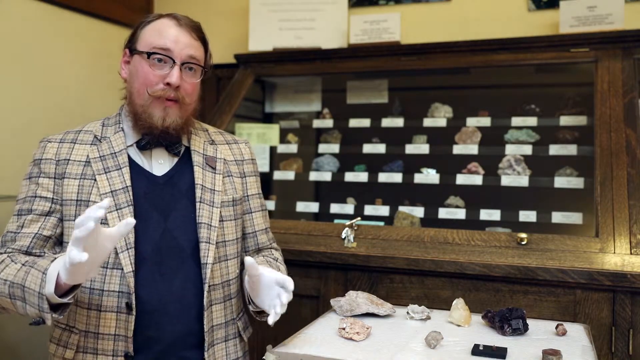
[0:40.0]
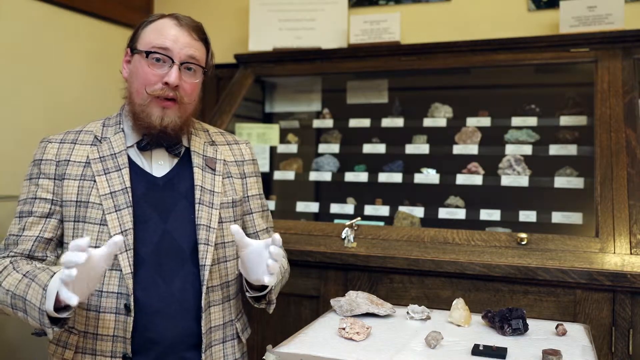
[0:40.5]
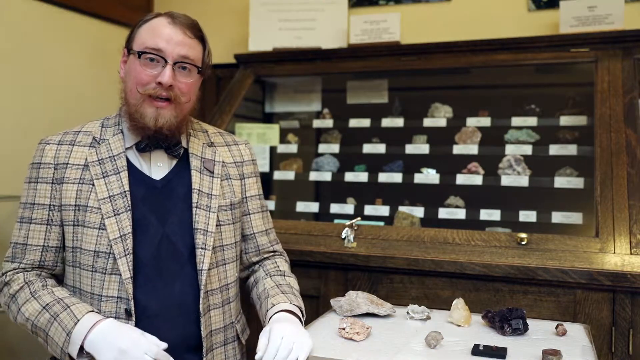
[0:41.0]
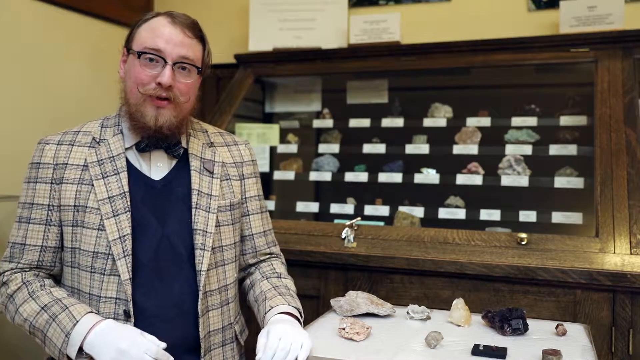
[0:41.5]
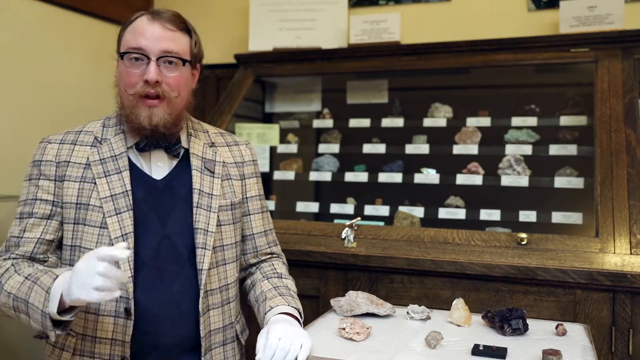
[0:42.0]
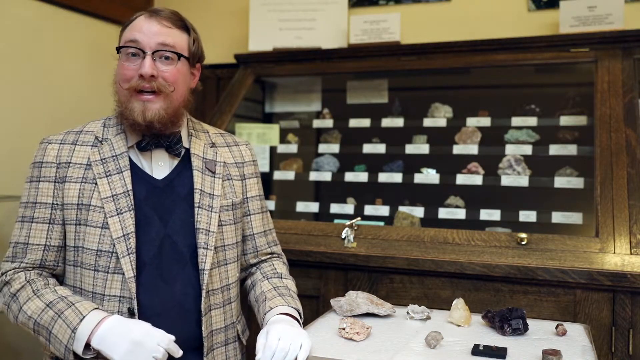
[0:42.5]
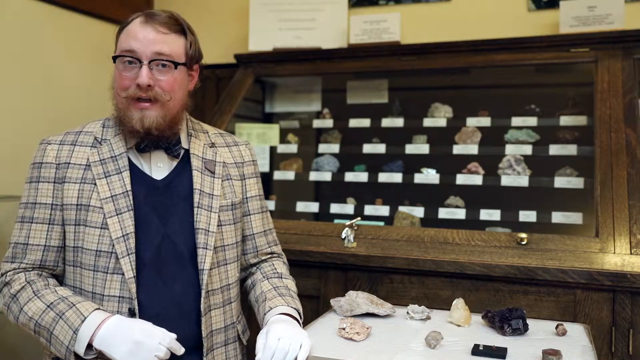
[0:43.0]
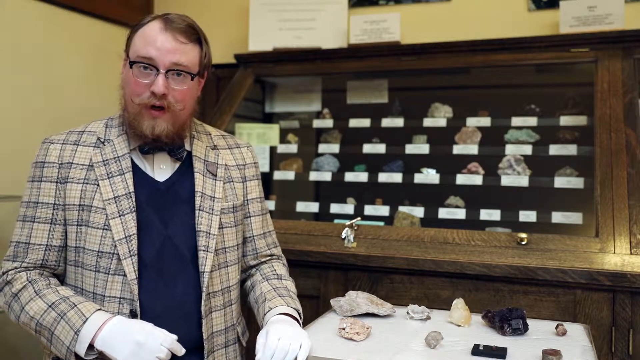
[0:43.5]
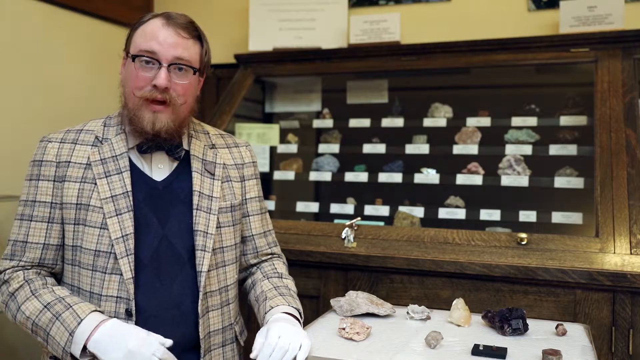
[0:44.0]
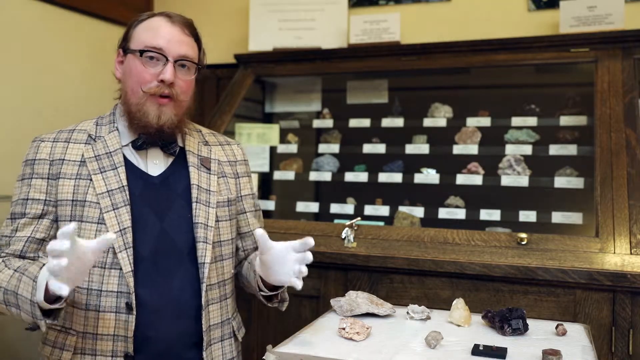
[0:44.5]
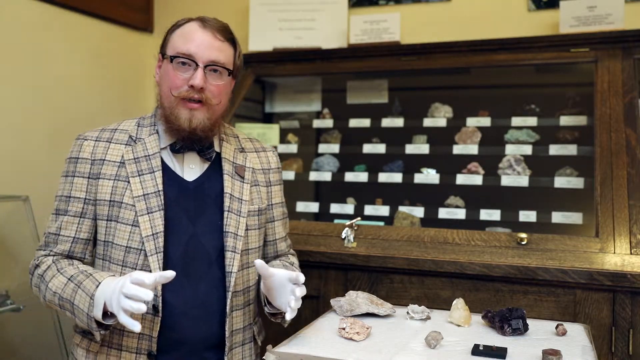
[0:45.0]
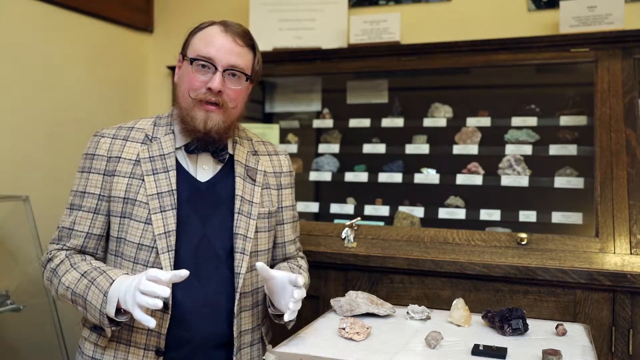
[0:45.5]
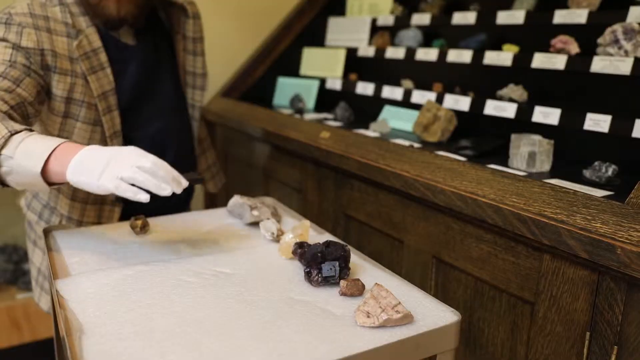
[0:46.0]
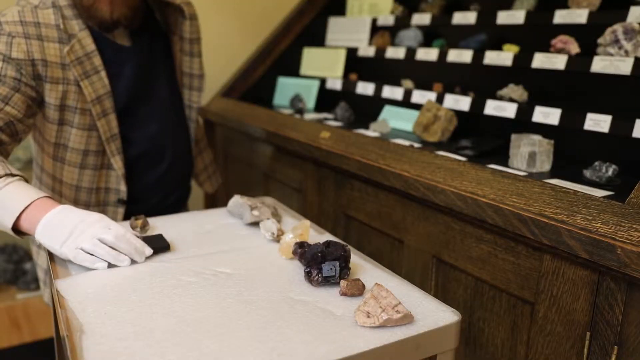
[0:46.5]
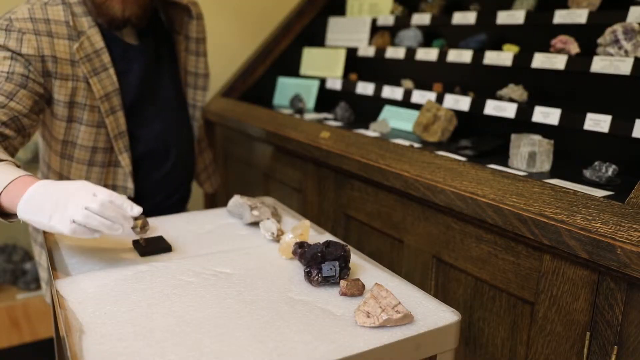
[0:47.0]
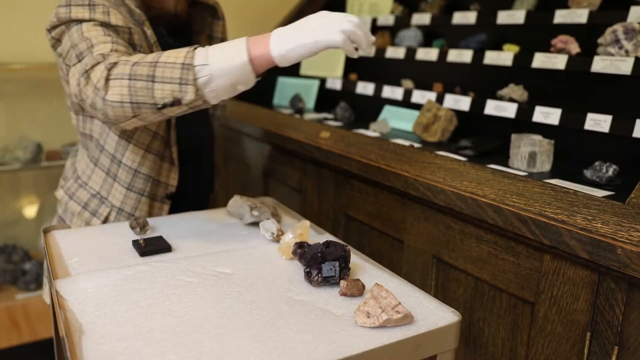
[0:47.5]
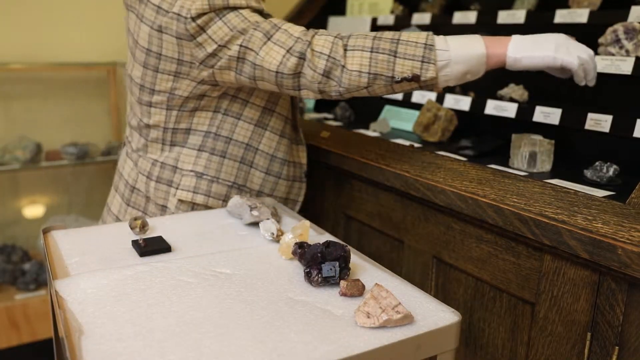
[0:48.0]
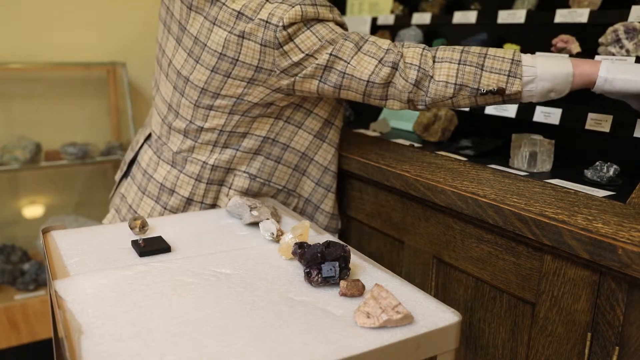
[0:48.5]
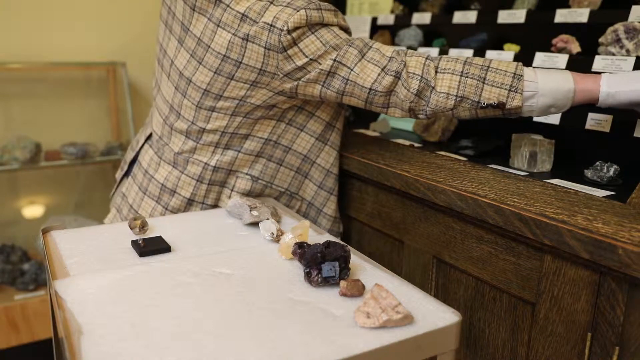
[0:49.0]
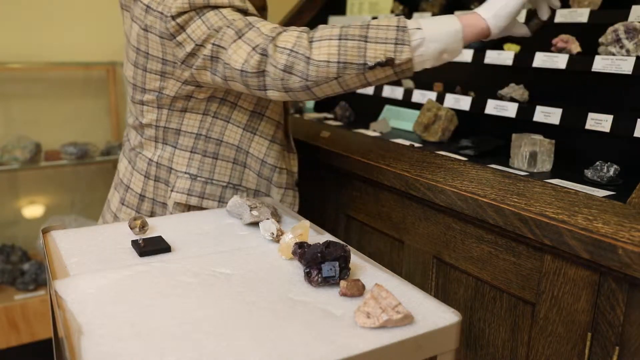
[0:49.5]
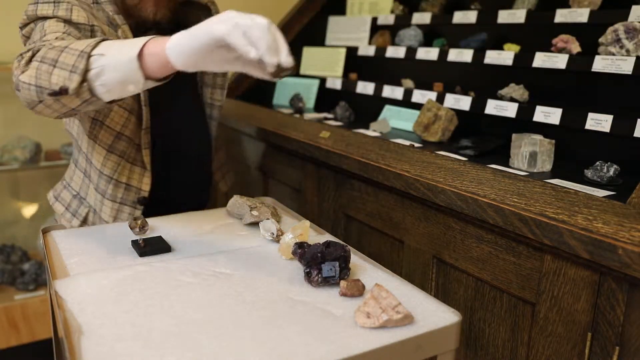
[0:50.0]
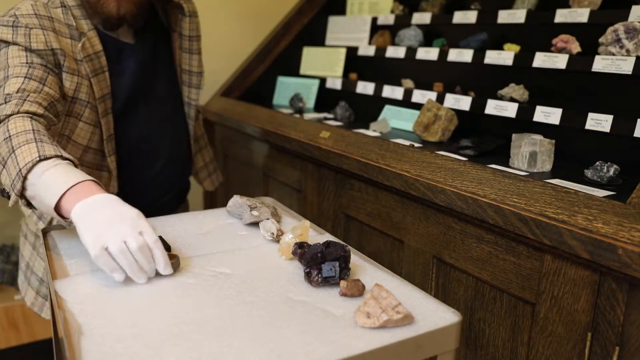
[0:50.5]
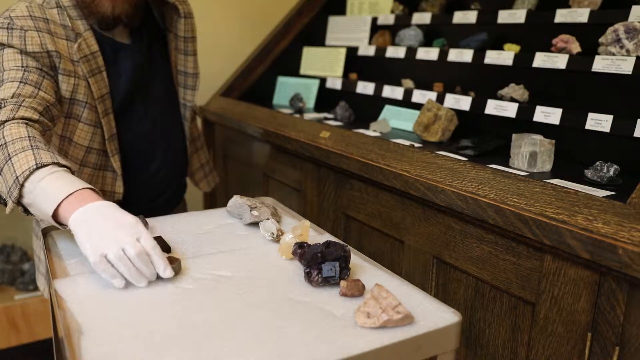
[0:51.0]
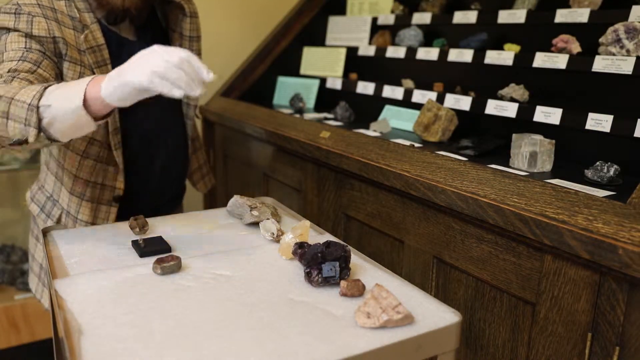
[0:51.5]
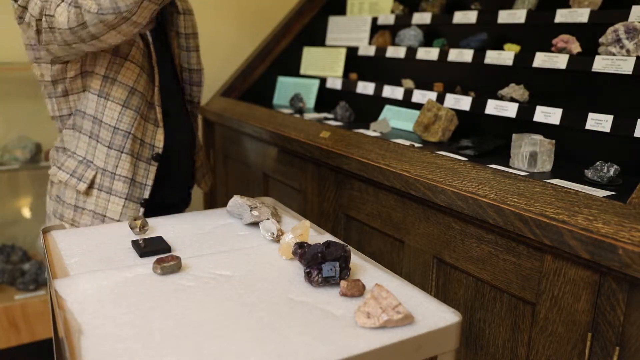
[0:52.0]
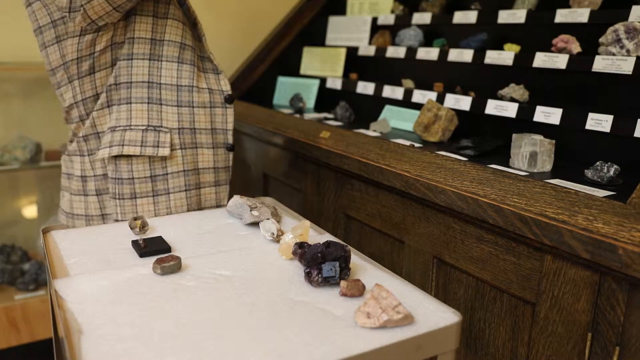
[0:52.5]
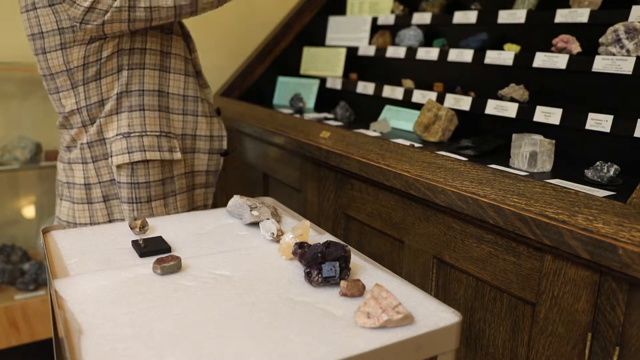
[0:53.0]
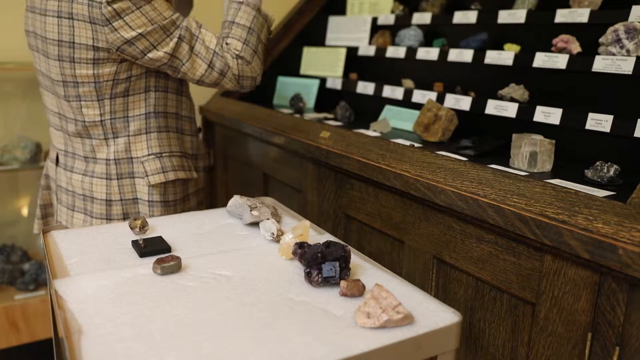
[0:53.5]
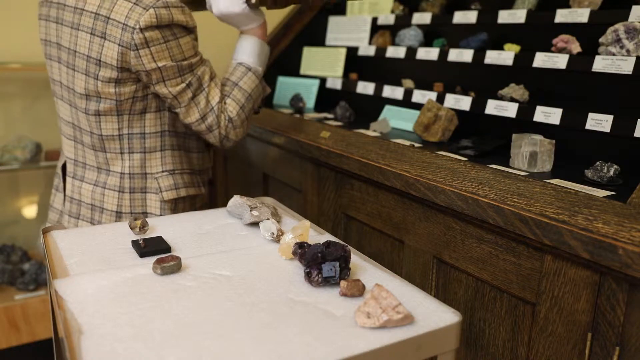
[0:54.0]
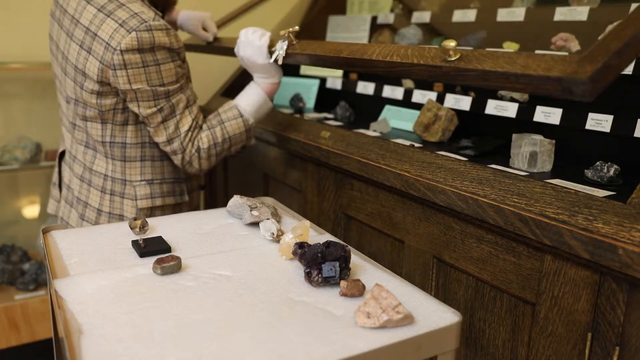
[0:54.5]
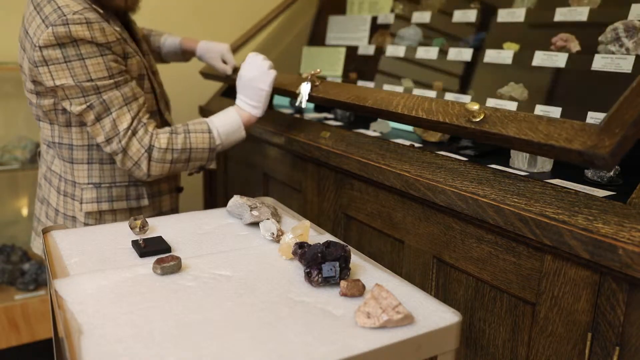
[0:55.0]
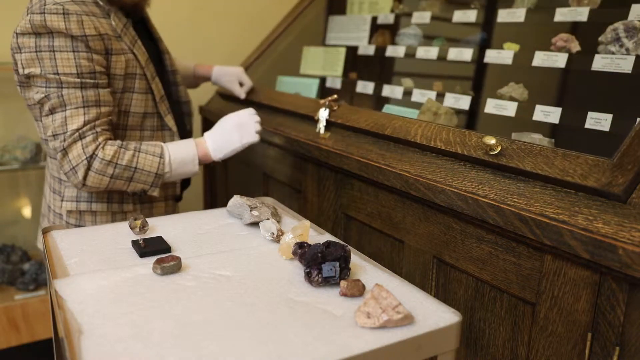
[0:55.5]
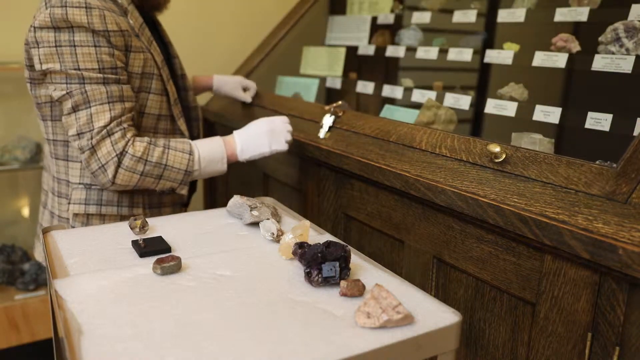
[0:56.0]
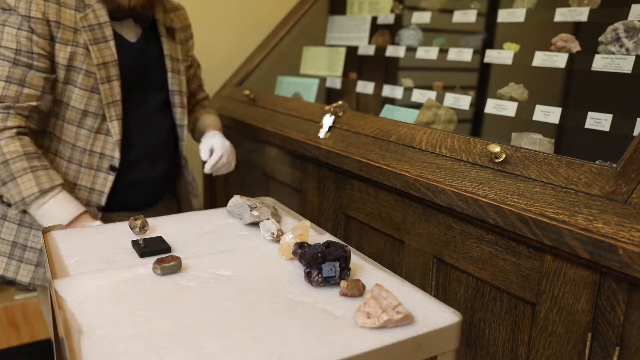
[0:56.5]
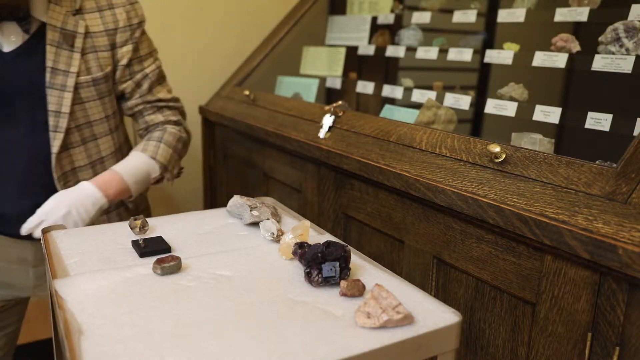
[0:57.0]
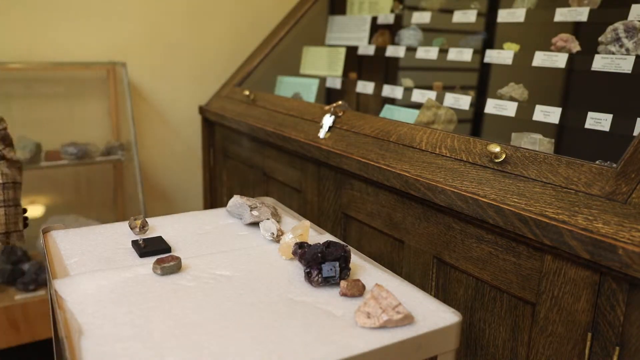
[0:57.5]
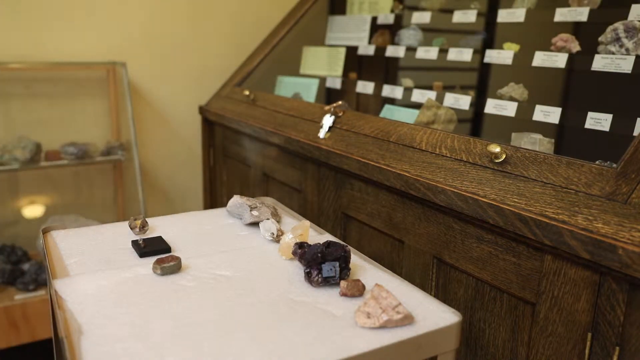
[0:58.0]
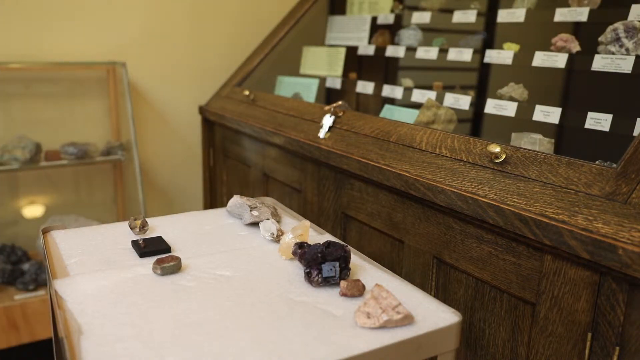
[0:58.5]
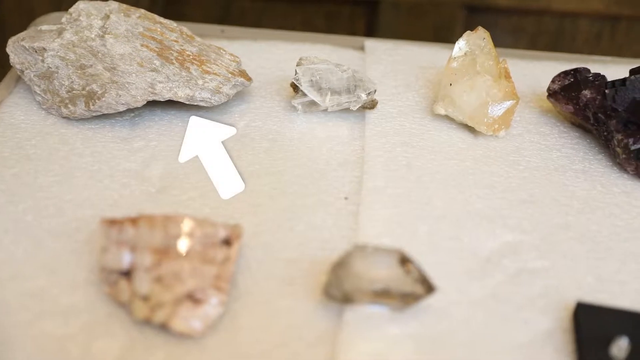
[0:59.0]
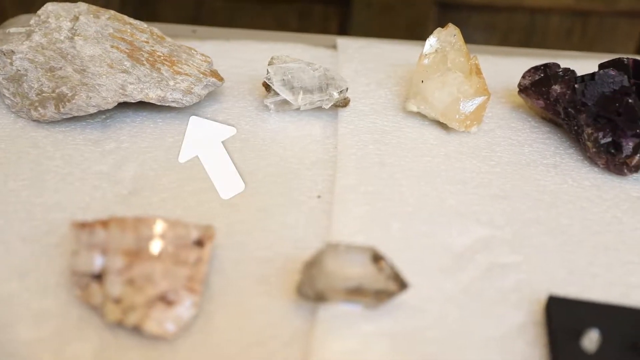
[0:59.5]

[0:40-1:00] Garrett Barmore stands on the left of the picture, wearing white cotton gloves, a blue V-neck sweater, a white shirt and a bow tie, and waves his arms in front of his chest to emphasise his words. The scene changes to a closer view of the glass-fronted, wall-mounted cabinet at the rear of the room, which holds rows of rock specimens, each with a white card label beneath it. Its glass front has been swung upwards to open it. Some larger blue, yellow and white cards with writing on them are on the left of the display. He reaches into the cabinet, pulls out a specimen and places it on a trolley in front of him, visible in the bottom left corner of the frame. The trolley already holds rock specimens arranged in a line along its right-hand side and a couple on the left. He swings the cabinet front down to close it, showing a set of keys in a lock in the middle. The scene briefly shows the rocks on the trolley on a white background of polystyrene foam: a white rock sample with a white arrow pointing to it, and some crystalline ones to the right.